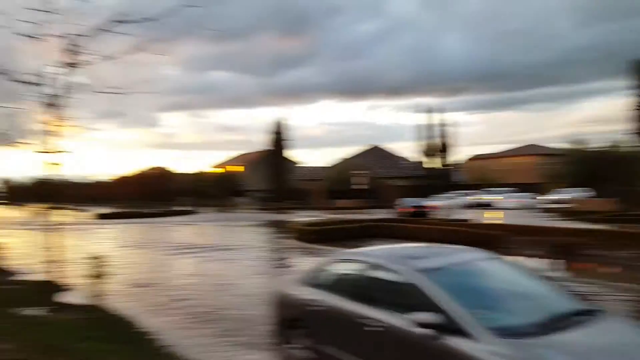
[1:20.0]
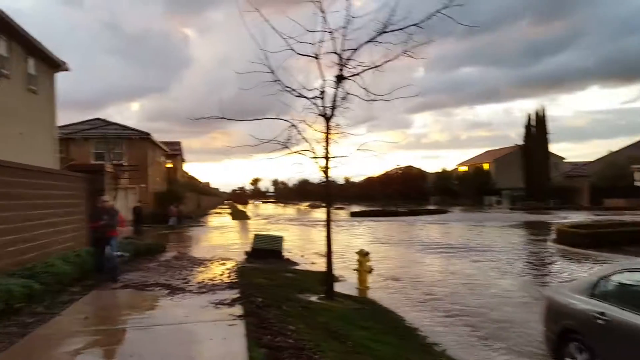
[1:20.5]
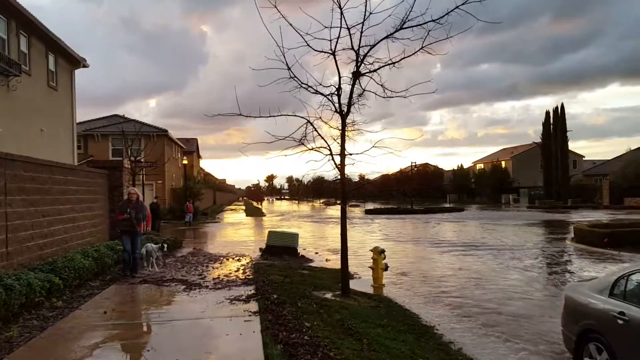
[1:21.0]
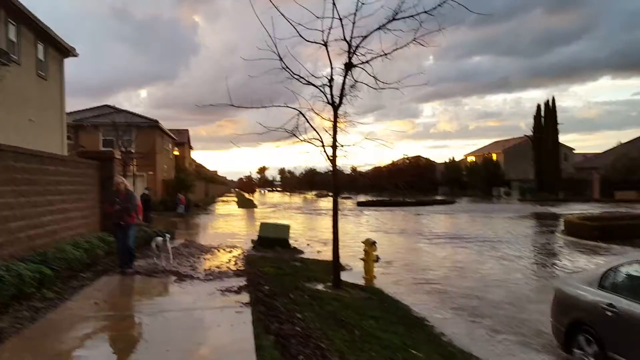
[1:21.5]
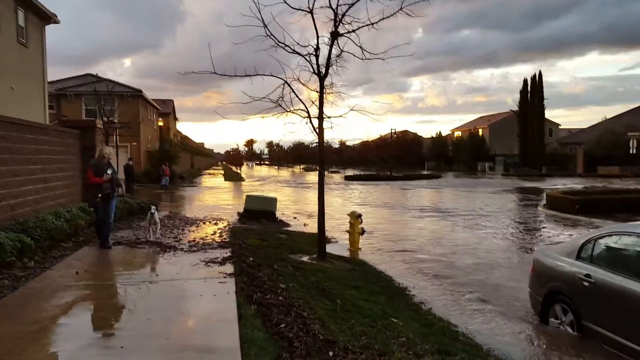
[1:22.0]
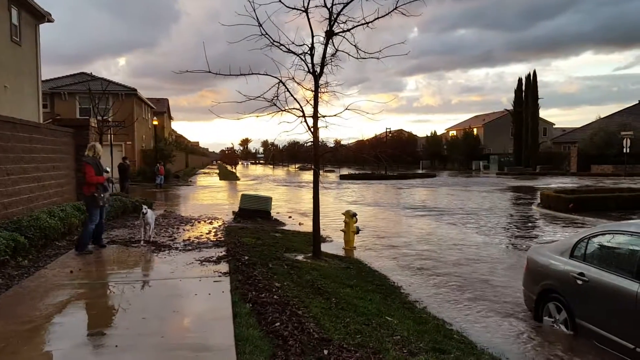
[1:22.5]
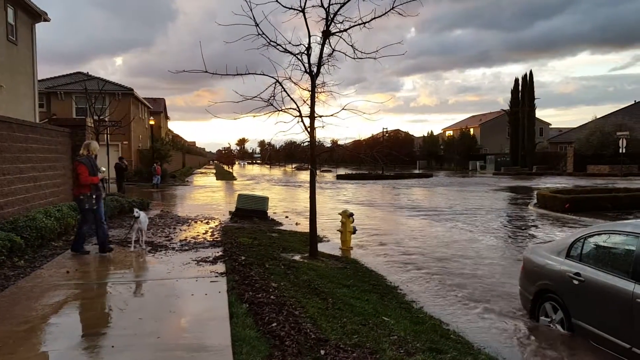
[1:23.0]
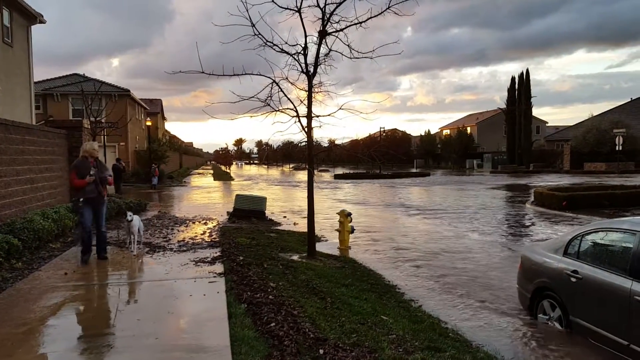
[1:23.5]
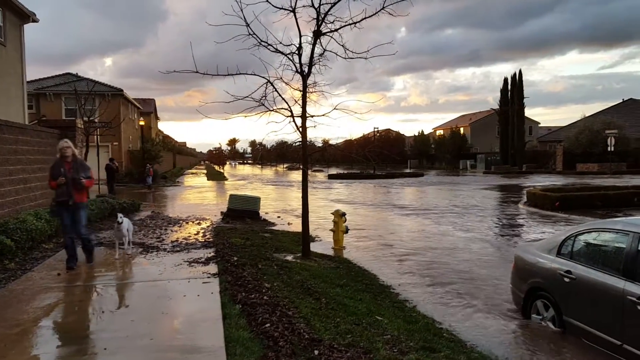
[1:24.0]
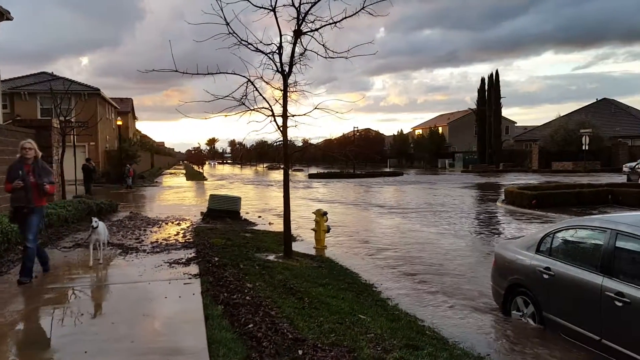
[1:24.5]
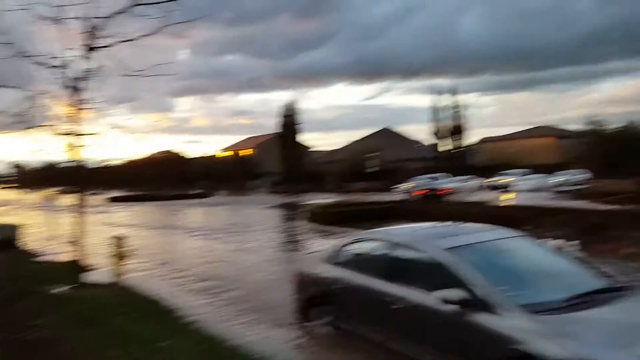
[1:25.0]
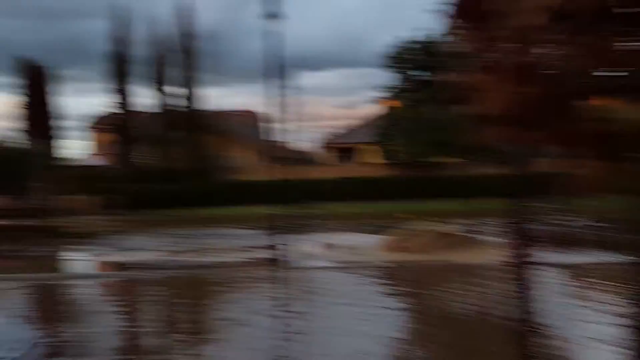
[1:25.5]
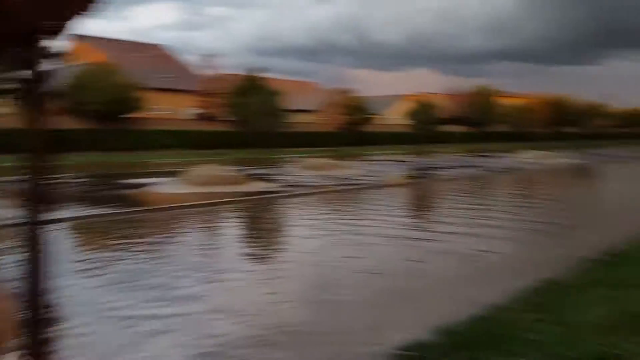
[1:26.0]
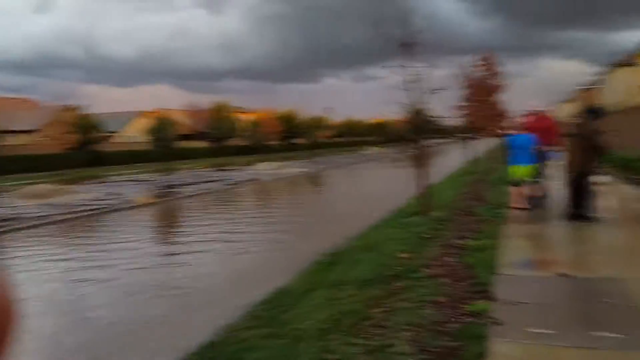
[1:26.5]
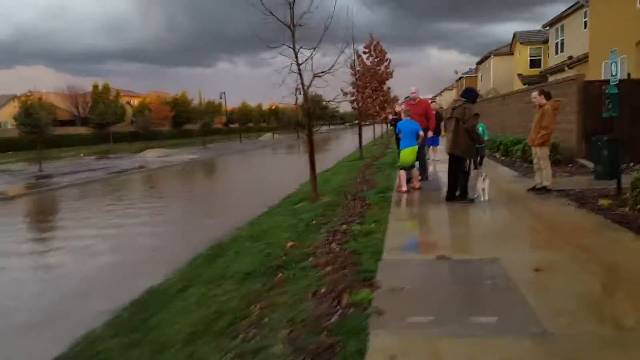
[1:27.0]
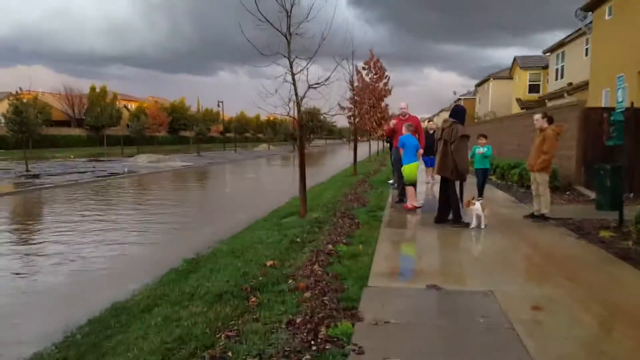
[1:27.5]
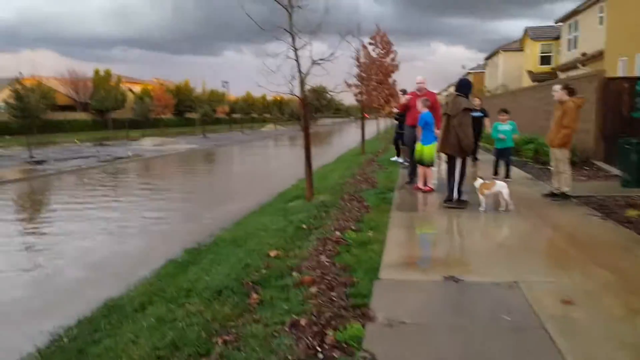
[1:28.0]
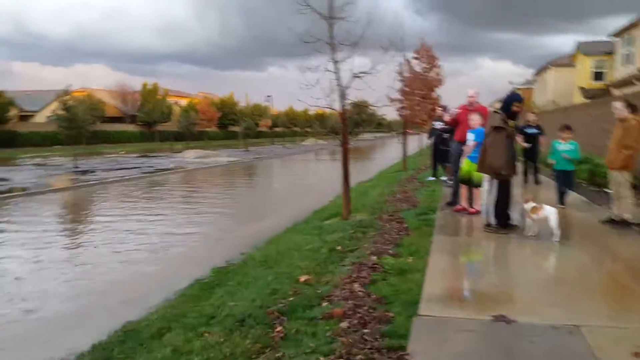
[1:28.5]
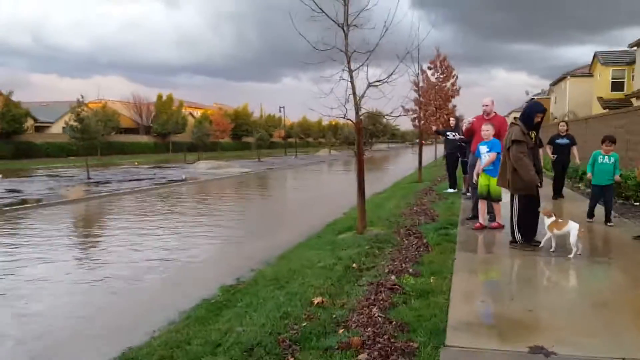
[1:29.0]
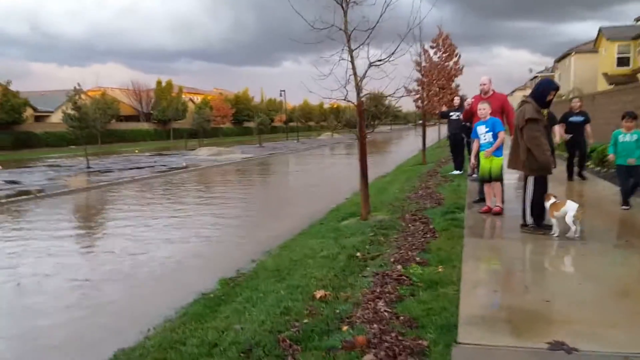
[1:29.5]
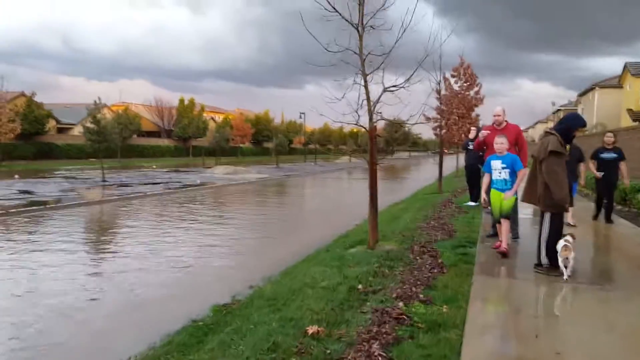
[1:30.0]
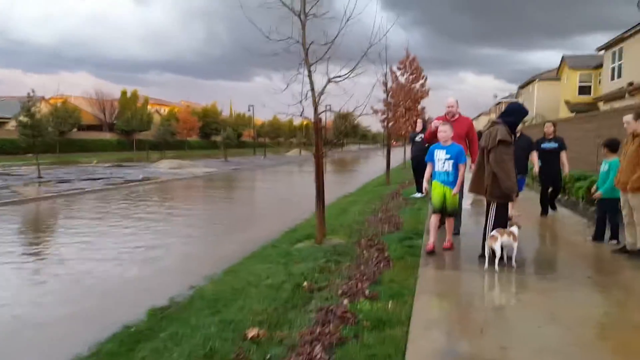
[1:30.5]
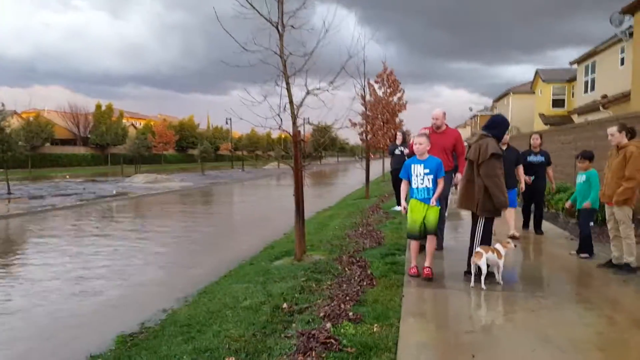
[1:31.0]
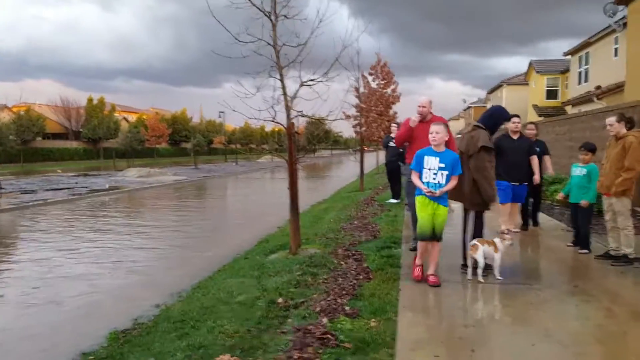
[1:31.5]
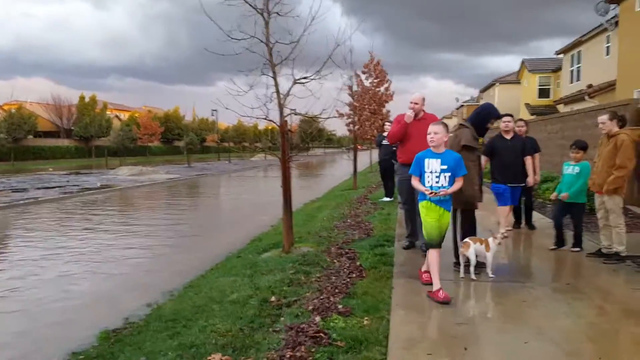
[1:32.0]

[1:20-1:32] The person holding the camera continues filming shakily in what seems to be a private neighborhood with flooded streets. A car has almost its four wheels completely covered by the water. Some people walk in the neighborhood, including a woman with a white dog, with more people in the background. He moves the camera quickly from right to left in an almost 180-degree turn, showing more people walking in the neighborhood: a few kids and a couple of grown men, one of whom has a dog. In the background are all the houses in the neighborhood and the entire flooded street.